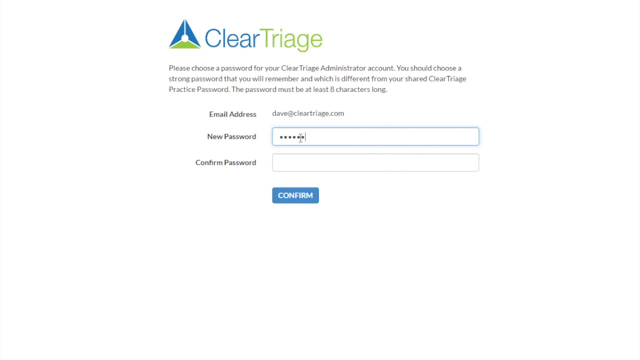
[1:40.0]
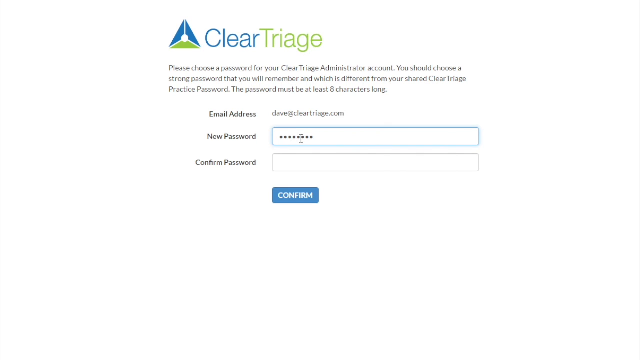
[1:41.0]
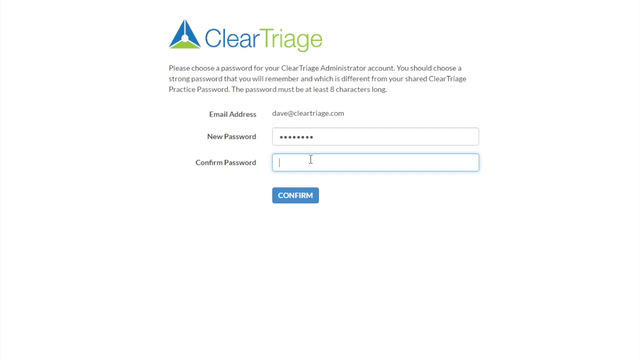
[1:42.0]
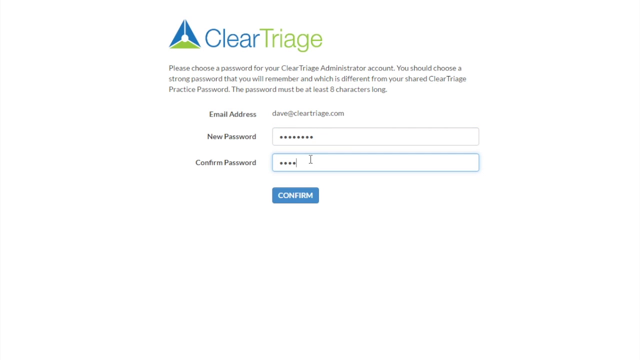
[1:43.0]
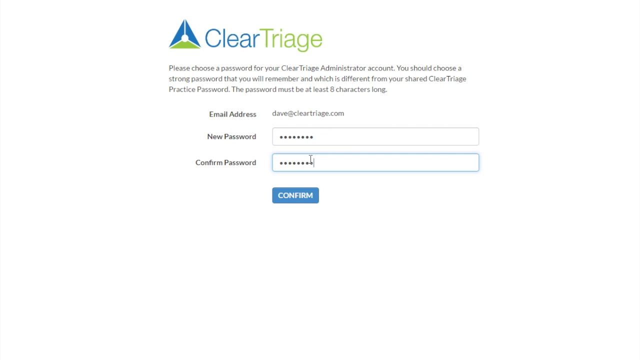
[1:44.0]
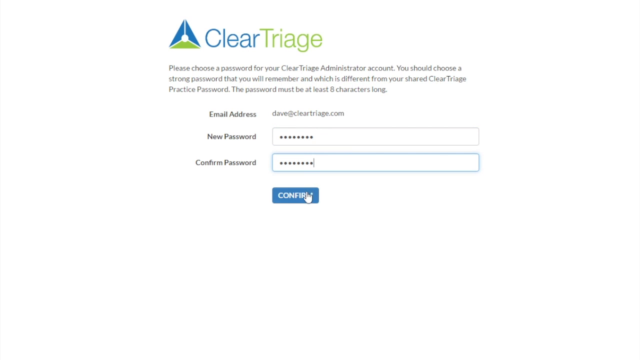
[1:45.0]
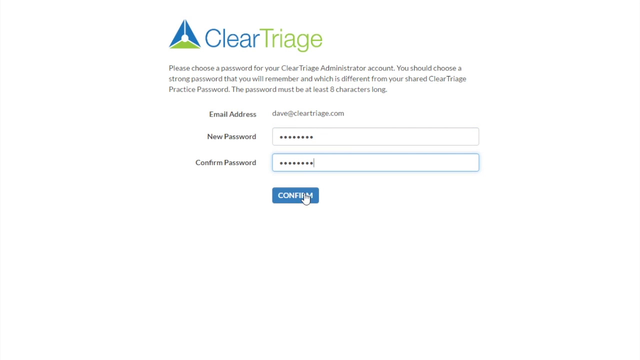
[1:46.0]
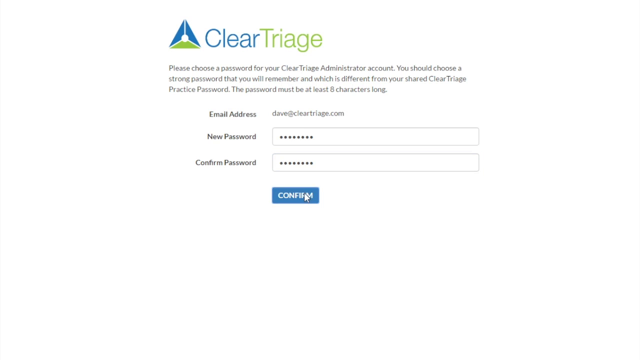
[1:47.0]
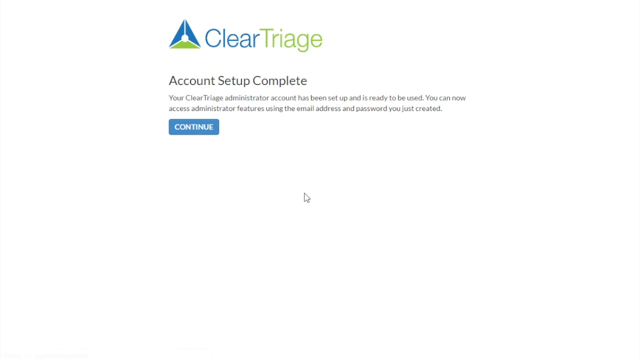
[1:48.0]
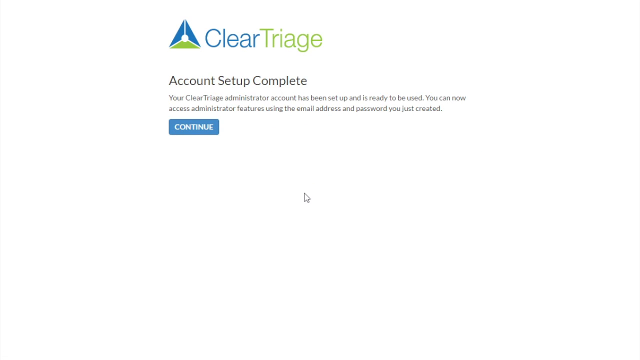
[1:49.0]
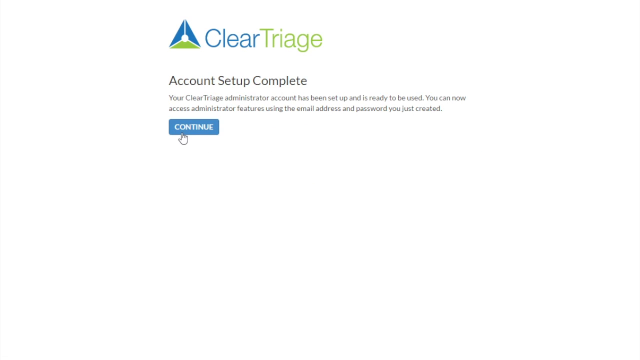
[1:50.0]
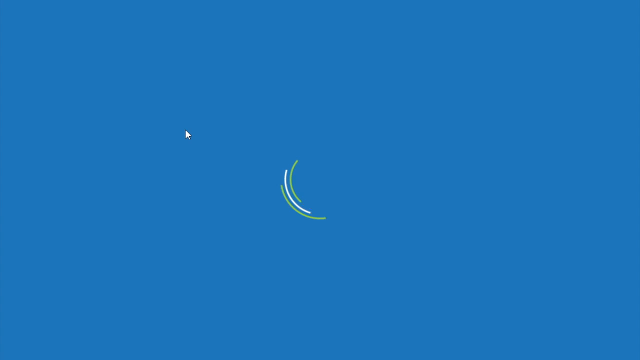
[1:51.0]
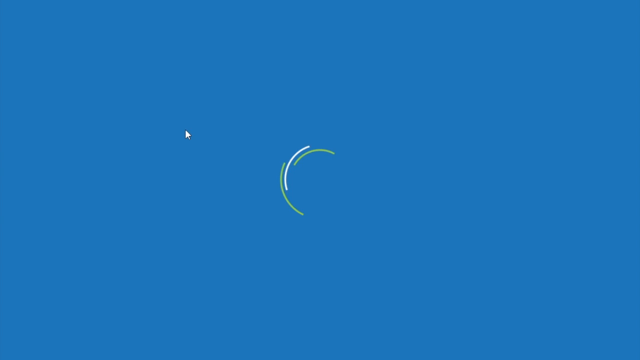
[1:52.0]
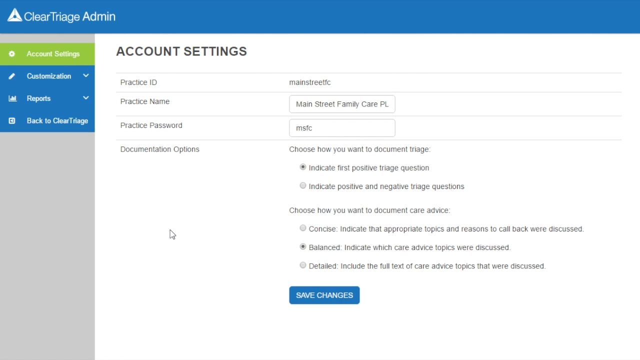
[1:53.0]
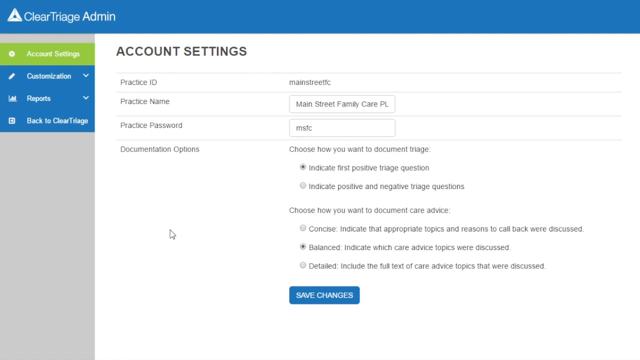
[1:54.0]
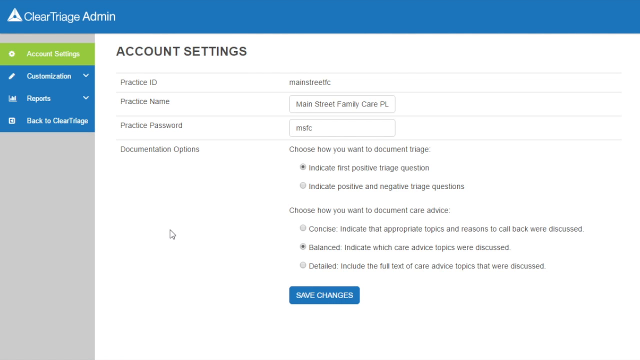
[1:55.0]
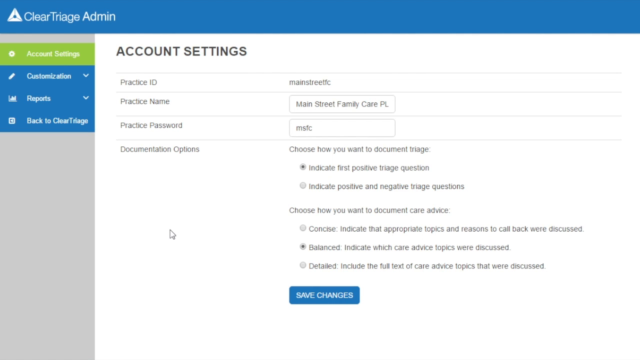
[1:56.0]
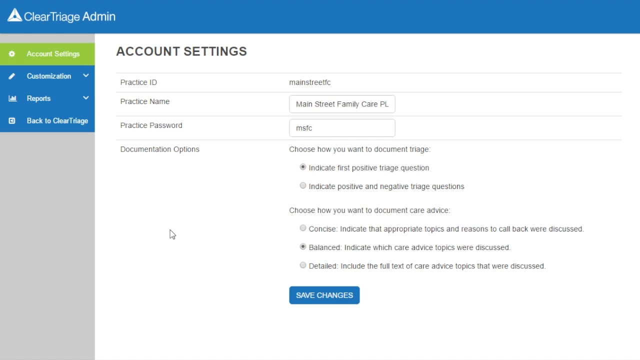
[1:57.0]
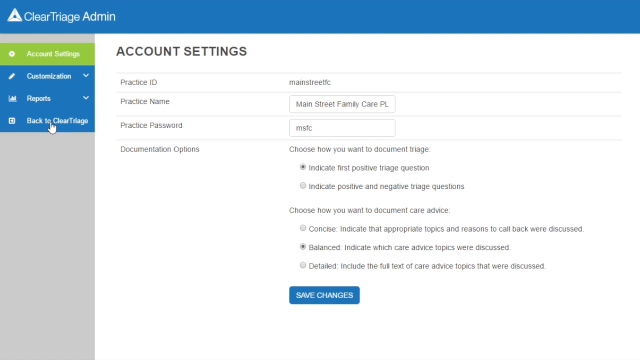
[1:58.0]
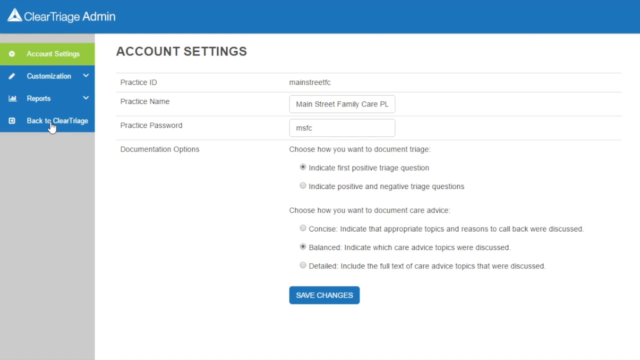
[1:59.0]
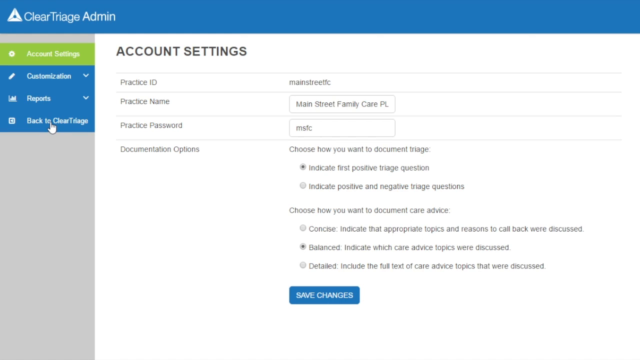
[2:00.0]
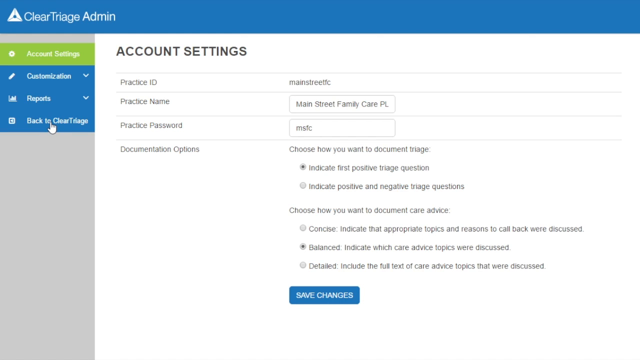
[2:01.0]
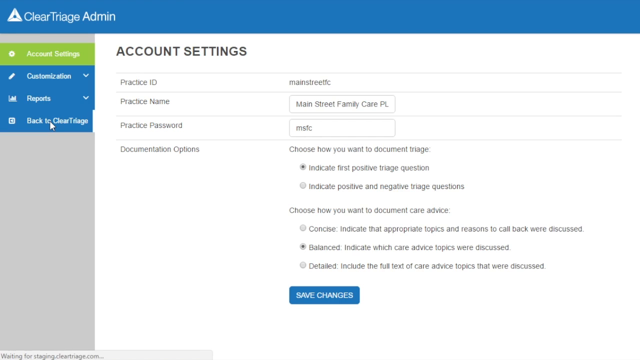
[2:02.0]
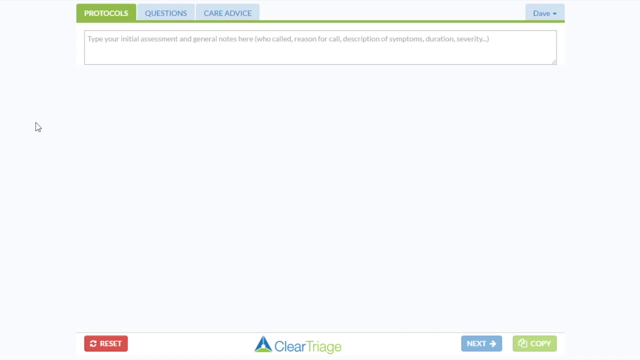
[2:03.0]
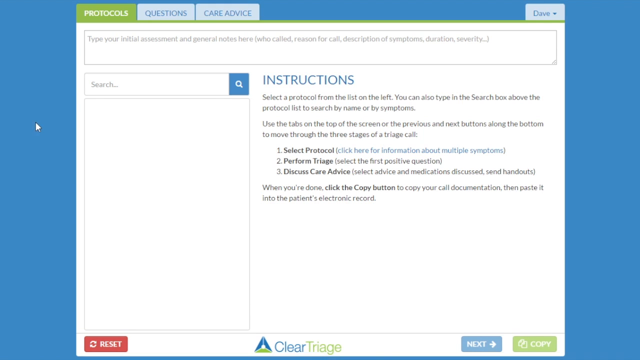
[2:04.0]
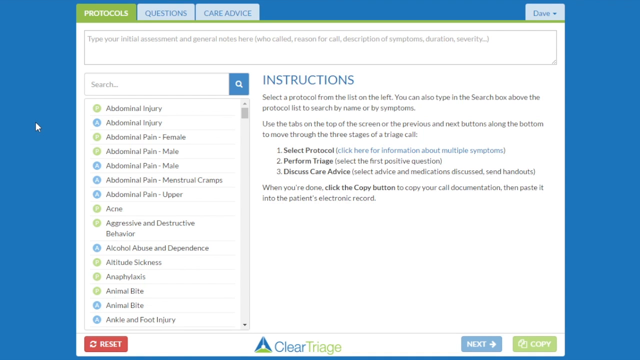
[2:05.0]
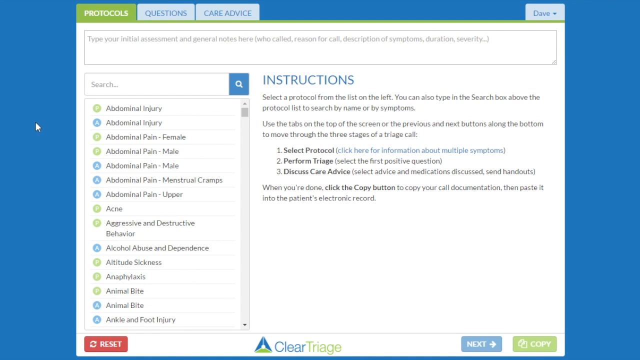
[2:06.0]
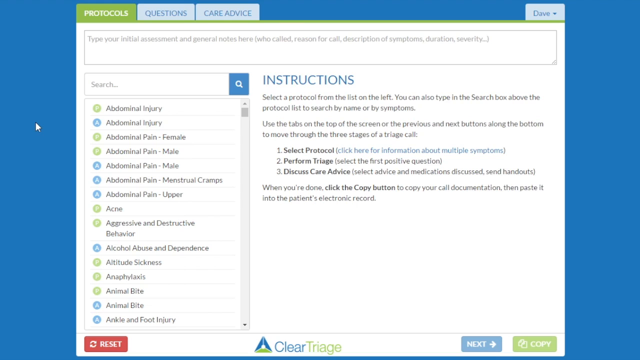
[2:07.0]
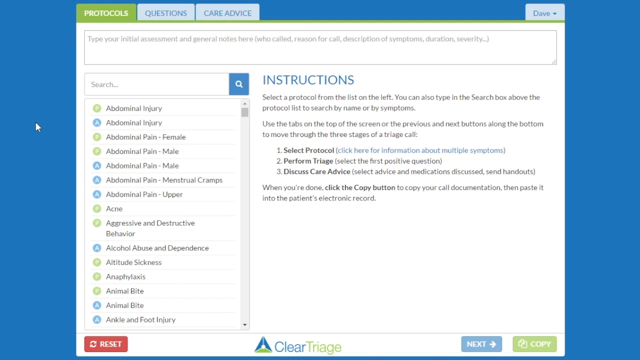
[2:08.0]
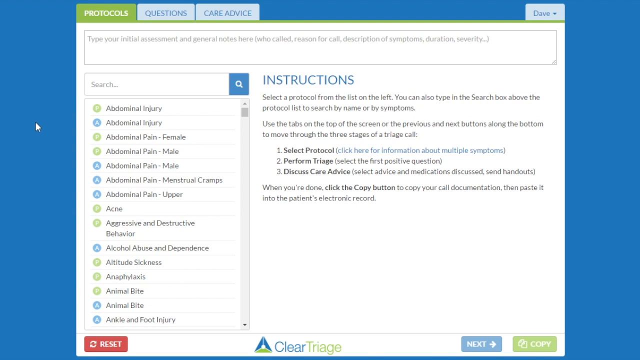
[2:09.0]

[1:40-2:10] Dave Schmidt types his new password on the Clear Triage administrator account password page. He finishes typing the 8 characters, moves to the Confirm Password box, types the same password there, and clicks the blue Confirm button. The screen changes to a page with the Clear Triage logo and an "Account Setup Complete" message reading "your Clear Triage administrator account has been set up and is ready to be used You can now access administrator features using the email address and password you just created". The mouse presses a blue Continue button, and the page moves to the Clear Admin account settings page with Practice ID, Practice Name, Practice Password and Documentation options. The first option reads "Choose how you want to document triage", with "Indicate first positive triage question" or "Indicate positive and negative triage questions"; the radio button for Indicate first positive triage question is selected. The next reads "Choose how you want to document care advice", with three options: "Concise Indicate that appropriate topics and reasons to call back were discussed", "Balanced Indicate which care advice topics were discussed" and "Detailed Include the full text of care advice topics that were discussed"; the radio button for Balanced is ticked. A blue Save Changes button is at the bottom of the page. The mouse moves to a blue section on the left-hand side of the screen with three options: customisation, reports and back to clear triage. The mouse hovers over back to clear triage, and the page returns to the Clear Triage protocols instruction page.